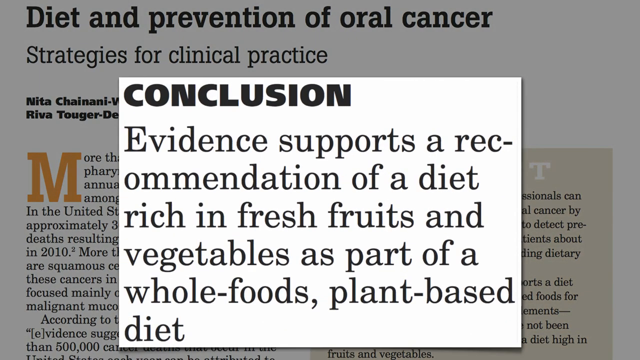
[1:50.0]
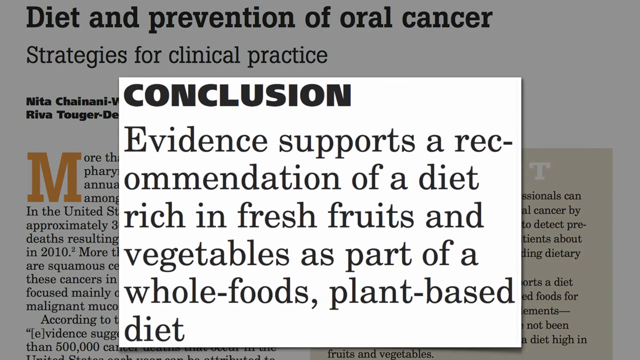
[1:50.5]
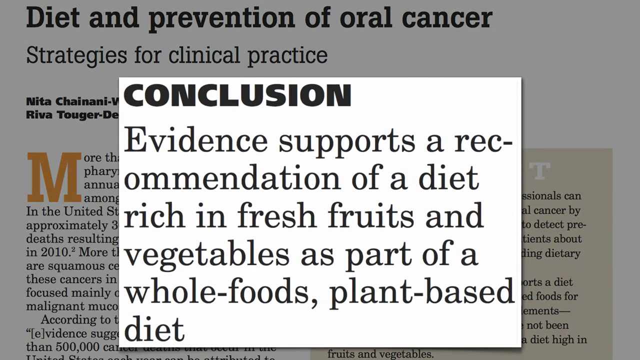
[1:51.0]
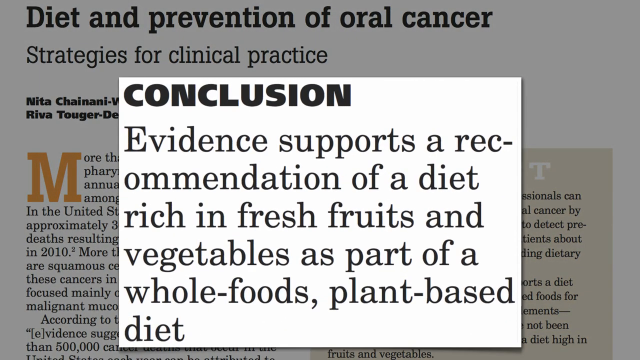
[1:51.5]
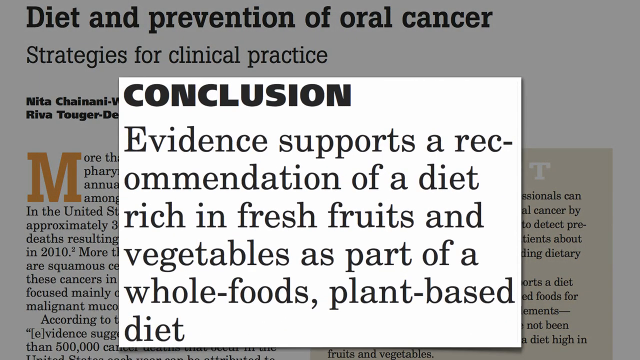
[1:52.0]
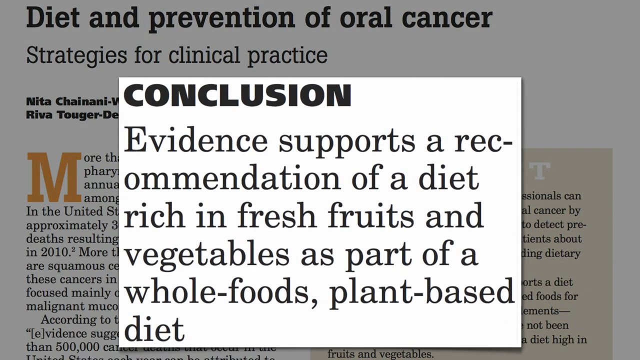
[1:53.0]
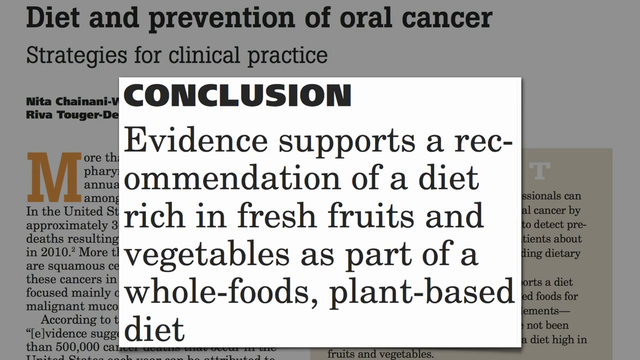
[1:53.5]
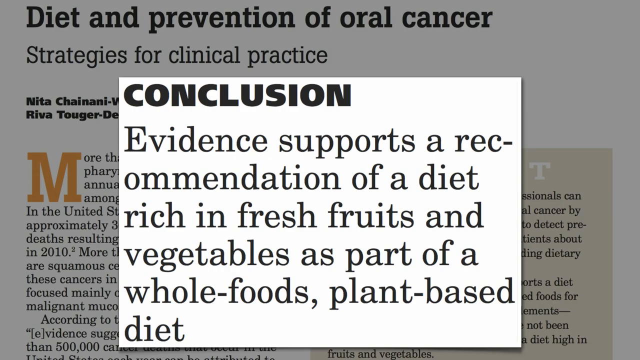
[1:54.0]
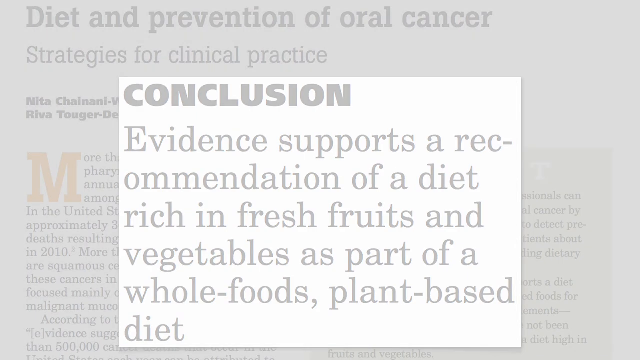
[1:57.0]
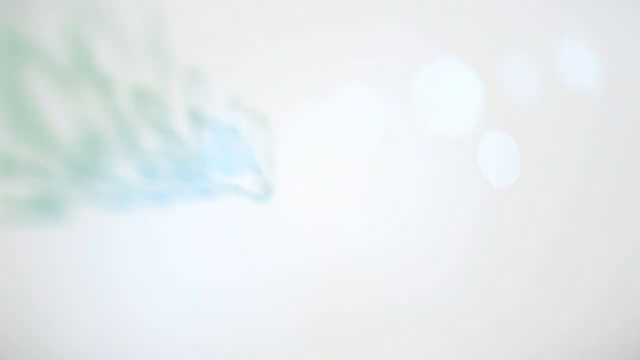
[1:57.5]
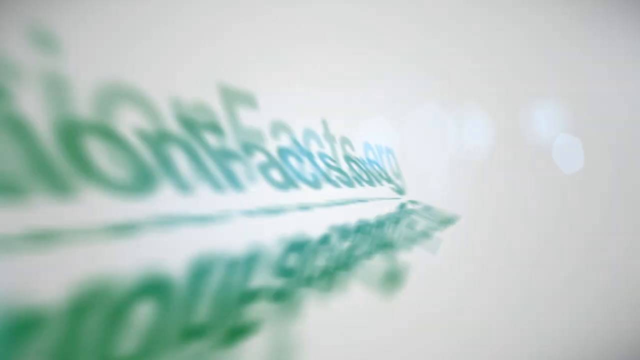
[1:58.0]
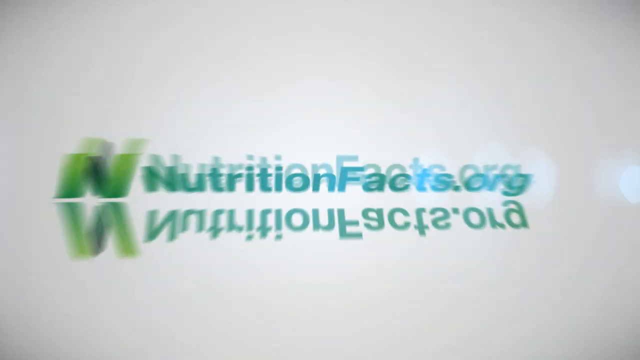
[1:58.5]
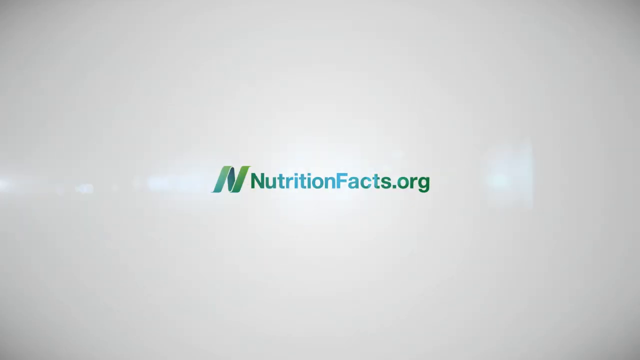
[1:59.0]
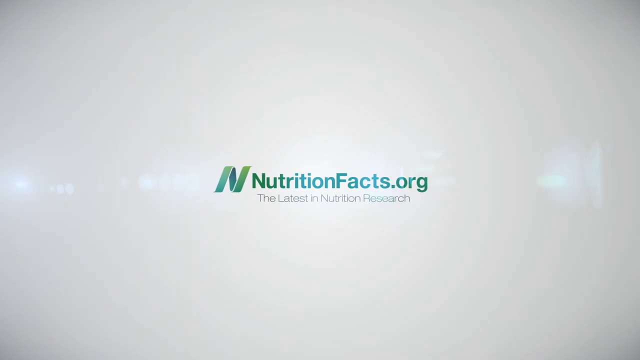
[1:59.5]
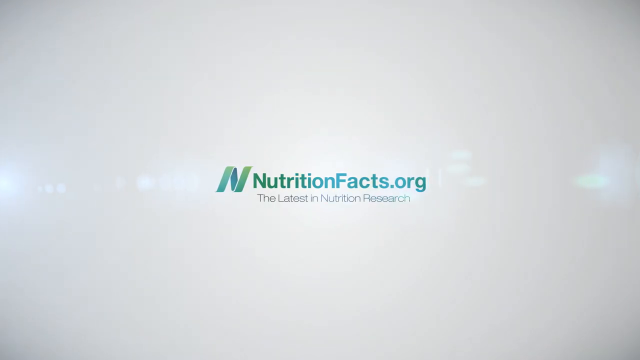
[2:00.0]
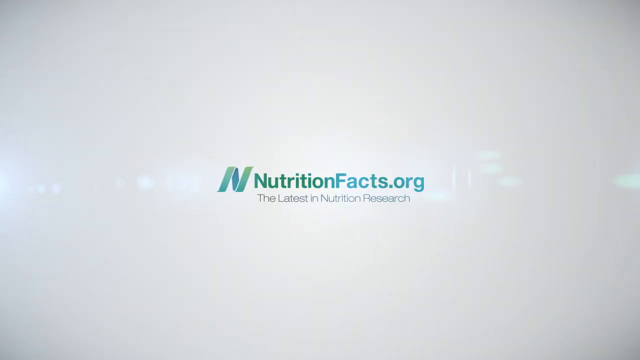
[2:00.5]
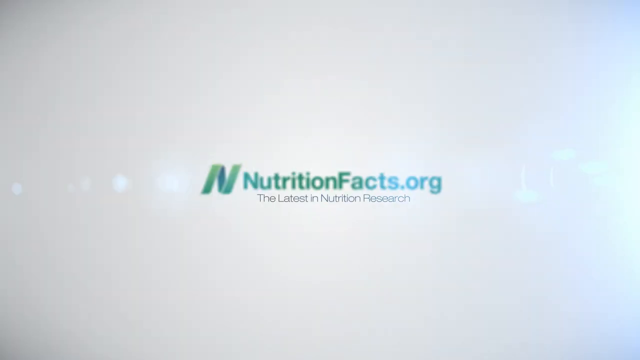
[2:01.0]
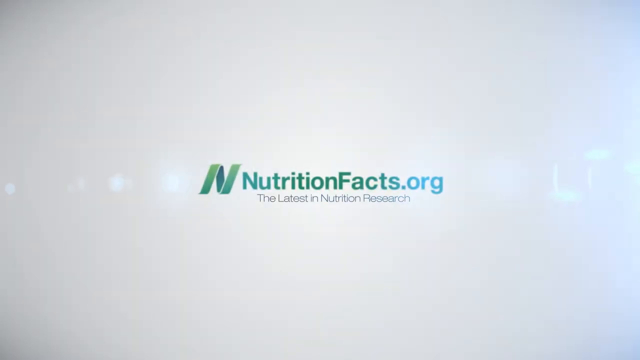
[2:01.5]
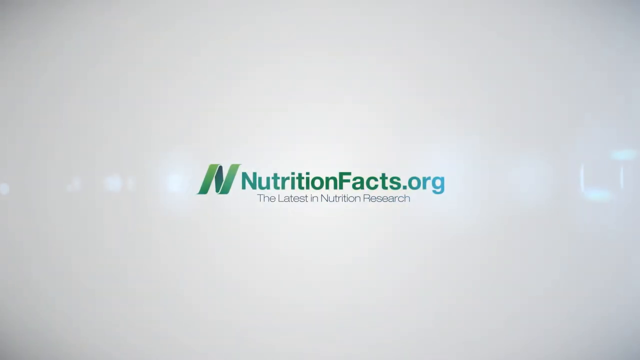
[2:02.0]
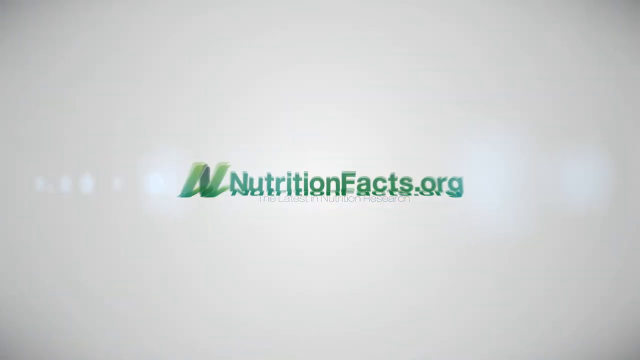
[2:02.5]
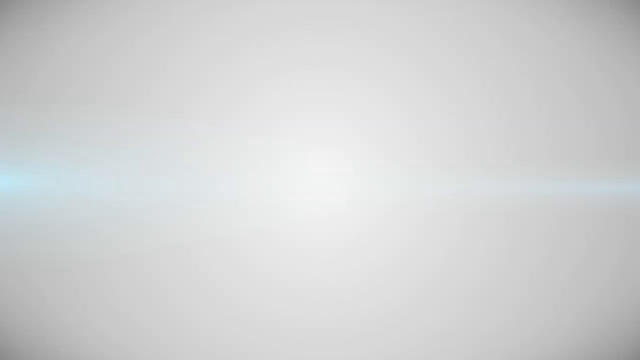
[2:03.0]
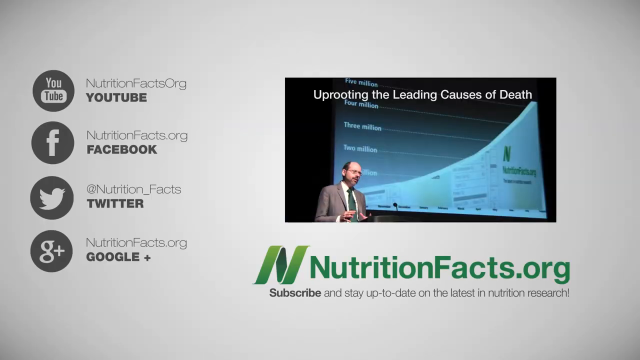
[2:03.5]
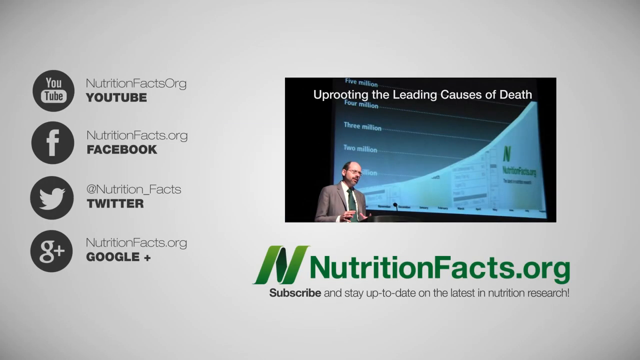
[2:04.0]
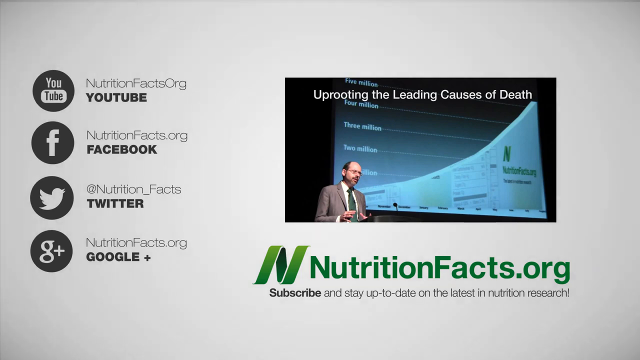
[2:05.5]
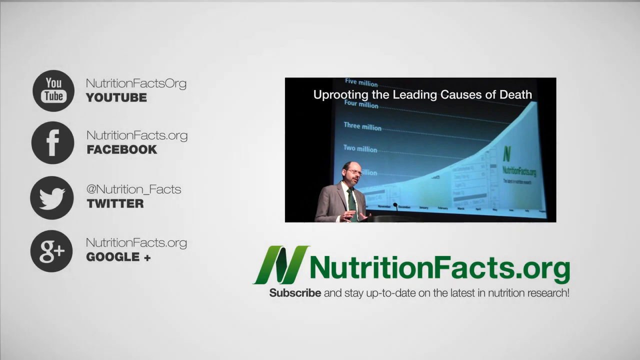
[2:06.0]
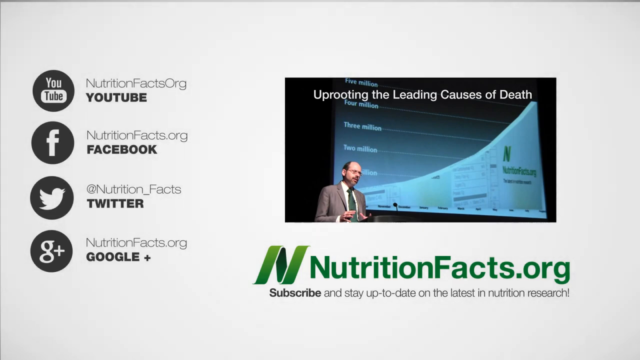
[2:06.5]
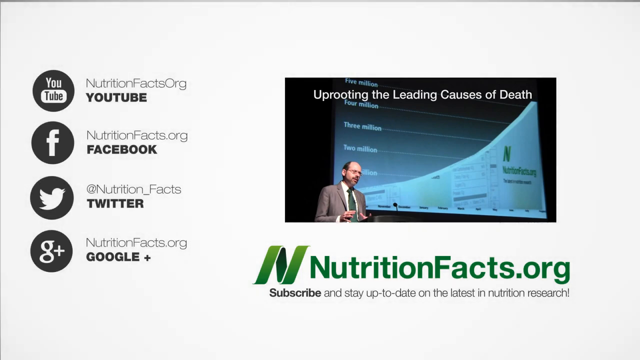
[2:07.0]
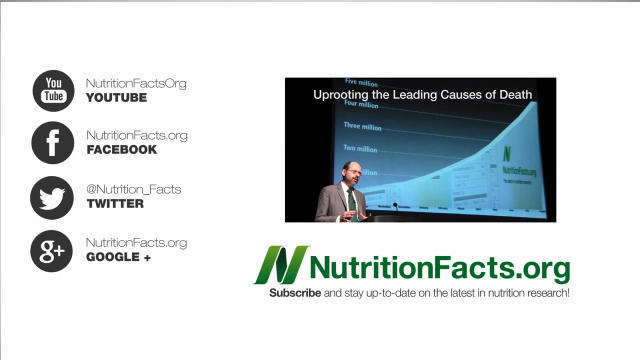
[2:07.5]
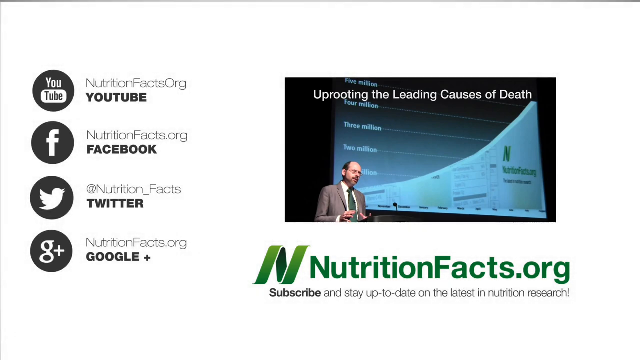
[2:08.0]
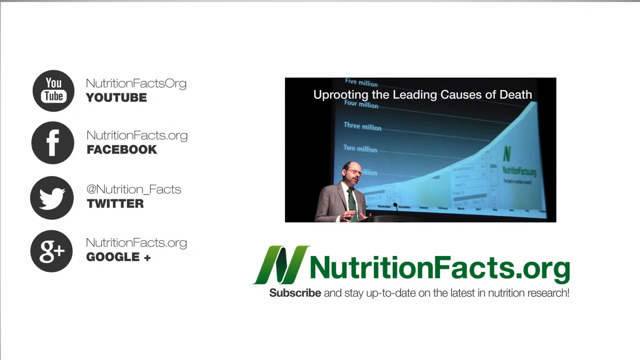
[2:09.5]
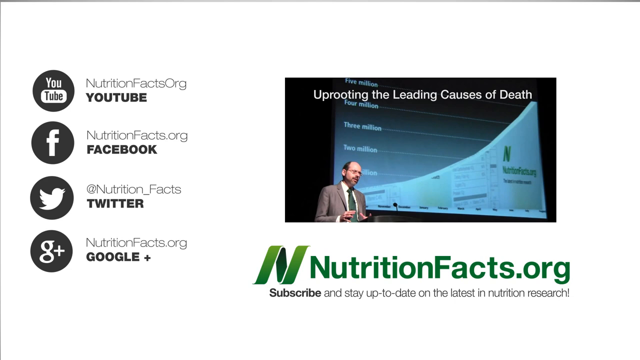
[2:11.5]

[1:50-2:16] The conclusion label reads "evidence supports a recommendation of diet rich in fresh fruits and vegetables as part of the whole foods plant-based diet," popped up above the main article on diet and prevention of oral cancer. Next comes an animation of nutritionfacts.org in green-blue lettering, with a mostly faded white-gray background, and text reading "the latest in nutrition research." Near the end, part of a screenshot of a video appears showing a man, maybe giving a conference talk on uprooting the leading causes of death, with a graph up in a room. He has a green tie on, glasses, and a bald head, and some of his graphs have green lettering. On the left side, text reads "YouTube, Facebook, Twitter, nutritionfacts.org, Google Plus."